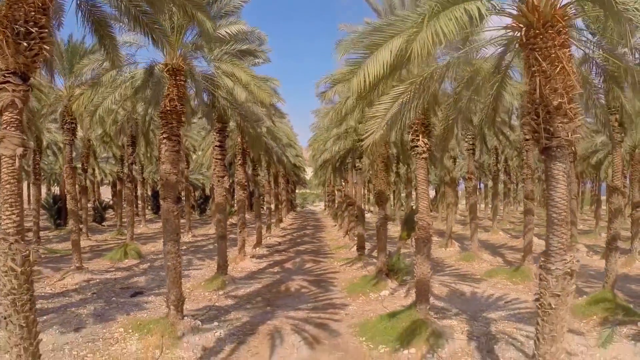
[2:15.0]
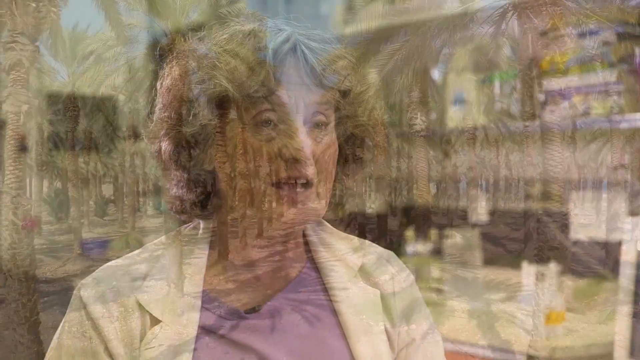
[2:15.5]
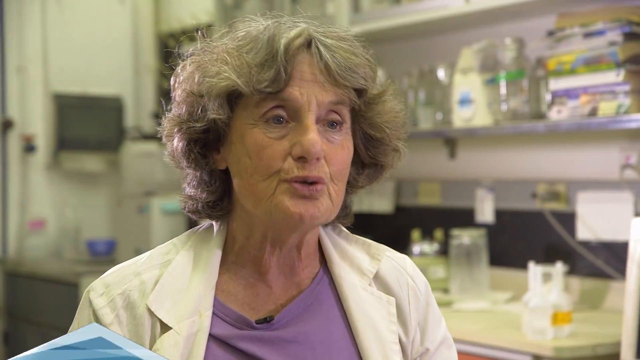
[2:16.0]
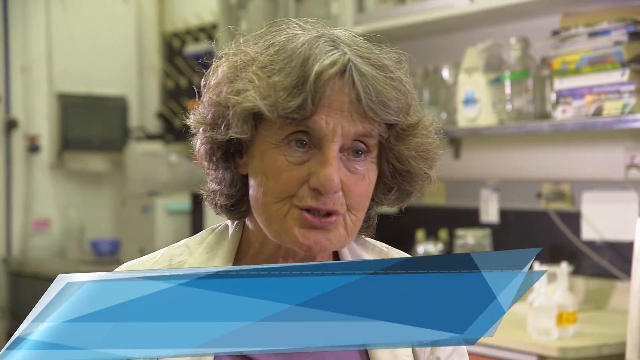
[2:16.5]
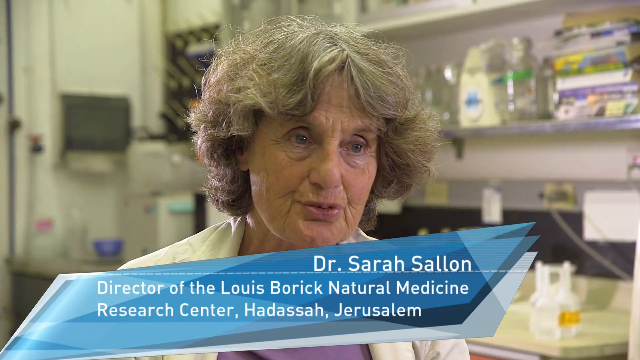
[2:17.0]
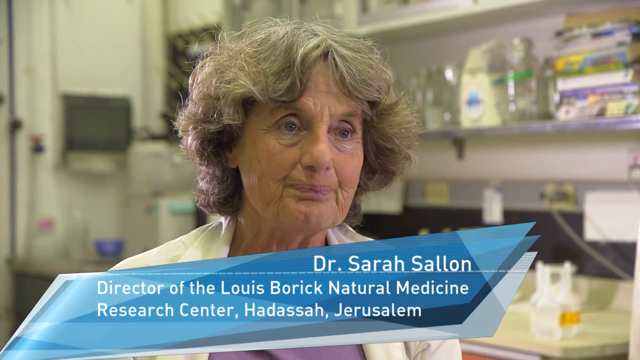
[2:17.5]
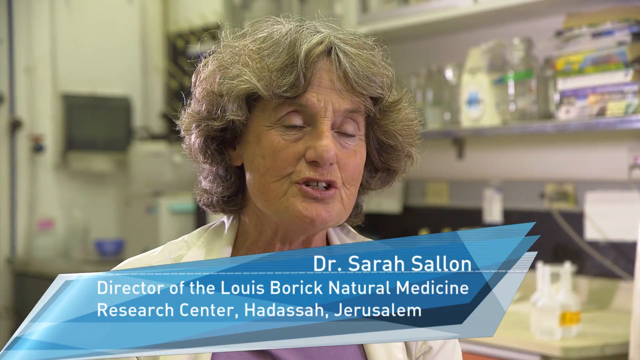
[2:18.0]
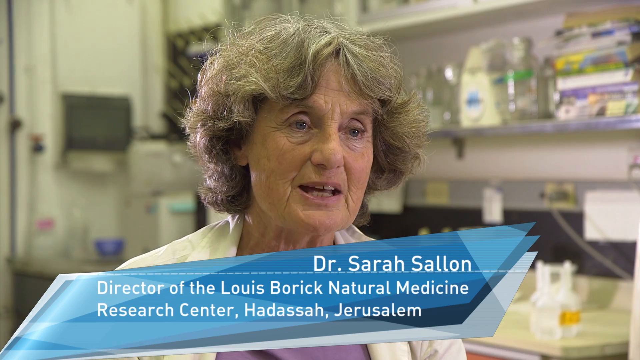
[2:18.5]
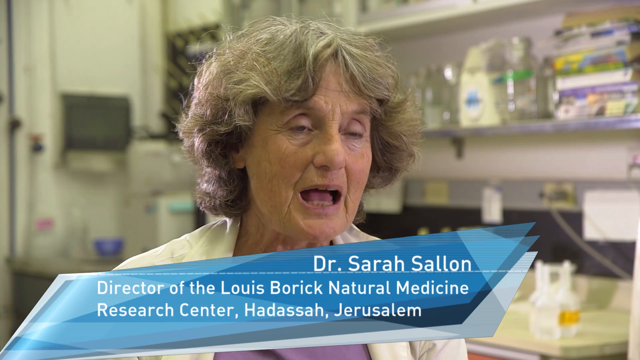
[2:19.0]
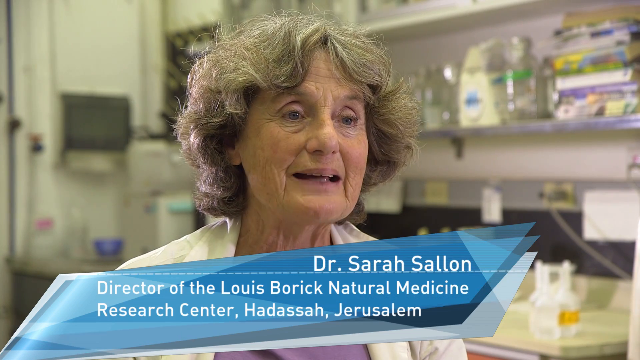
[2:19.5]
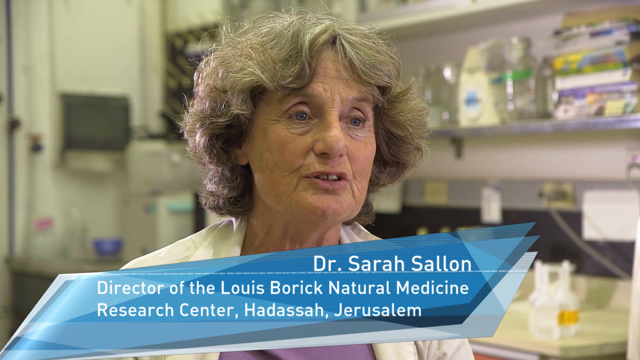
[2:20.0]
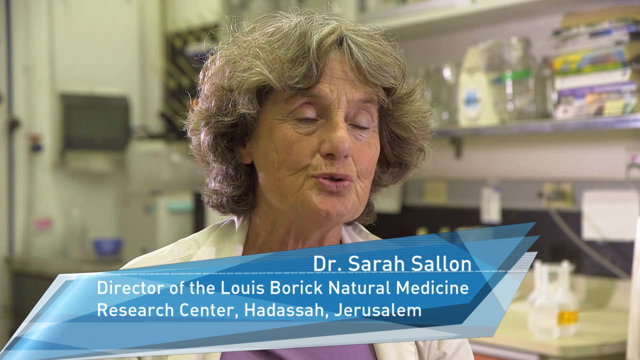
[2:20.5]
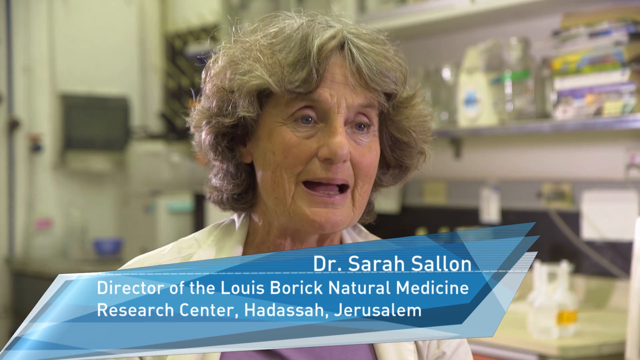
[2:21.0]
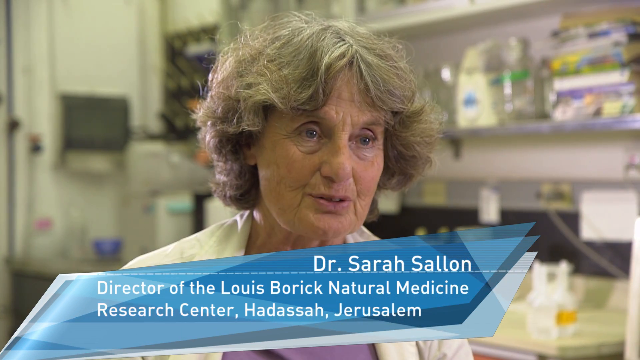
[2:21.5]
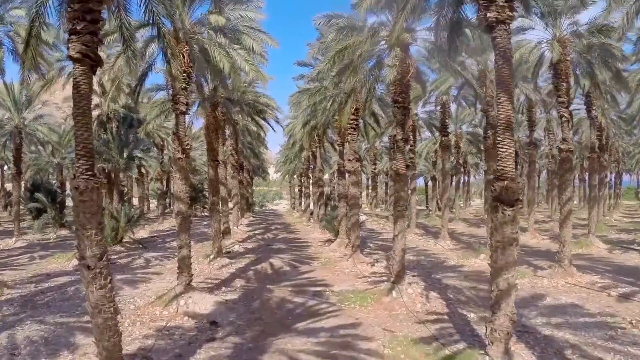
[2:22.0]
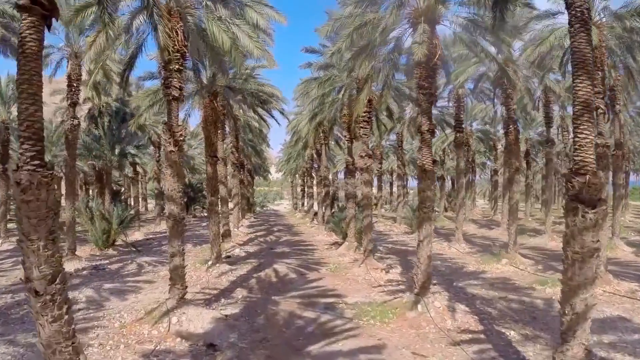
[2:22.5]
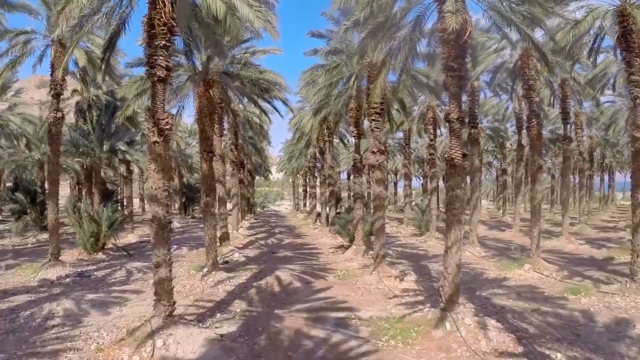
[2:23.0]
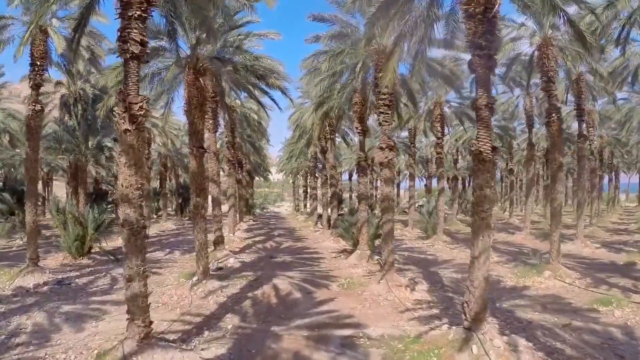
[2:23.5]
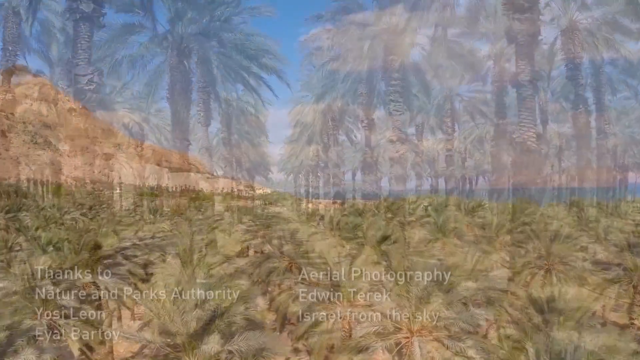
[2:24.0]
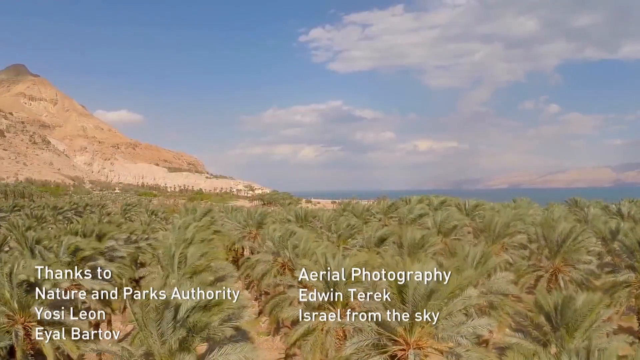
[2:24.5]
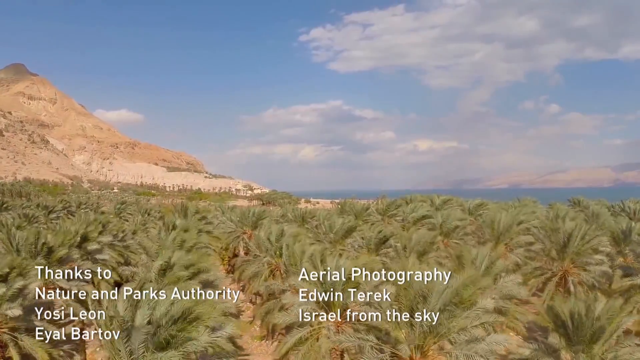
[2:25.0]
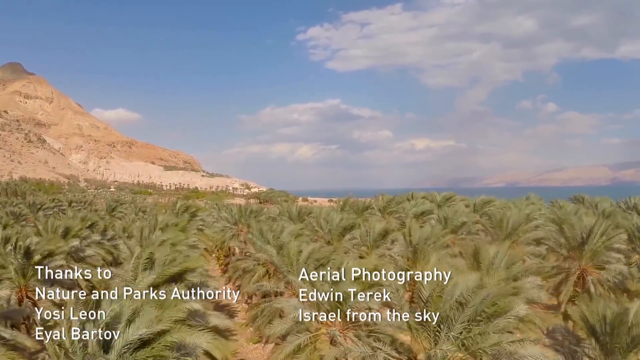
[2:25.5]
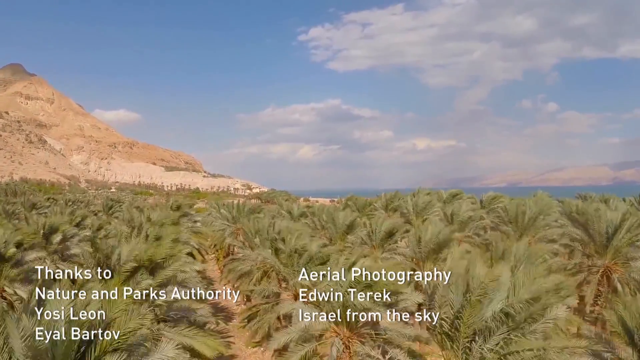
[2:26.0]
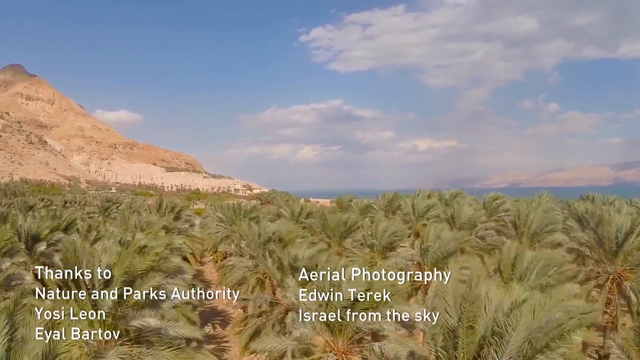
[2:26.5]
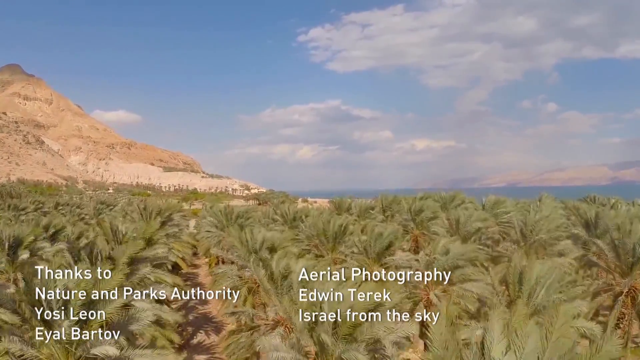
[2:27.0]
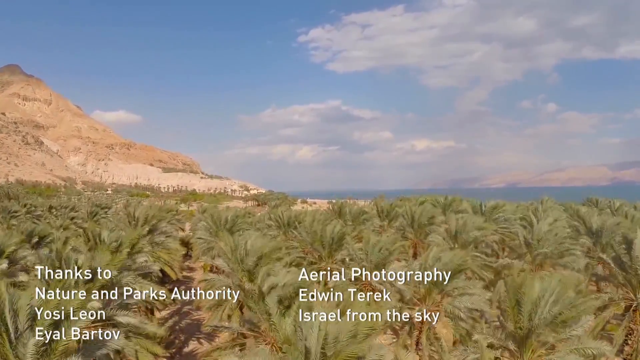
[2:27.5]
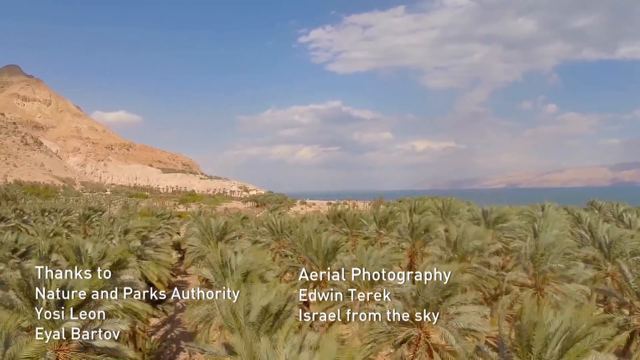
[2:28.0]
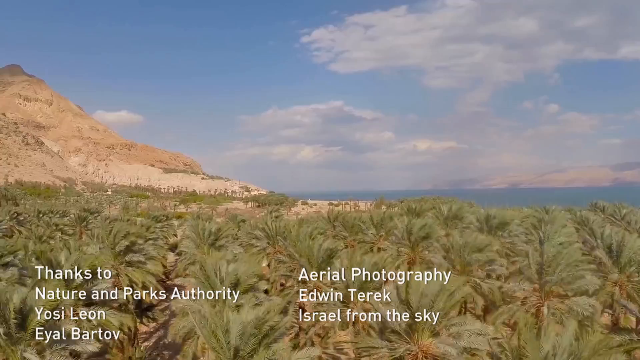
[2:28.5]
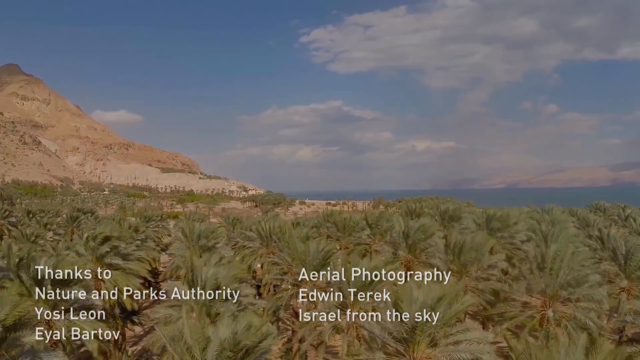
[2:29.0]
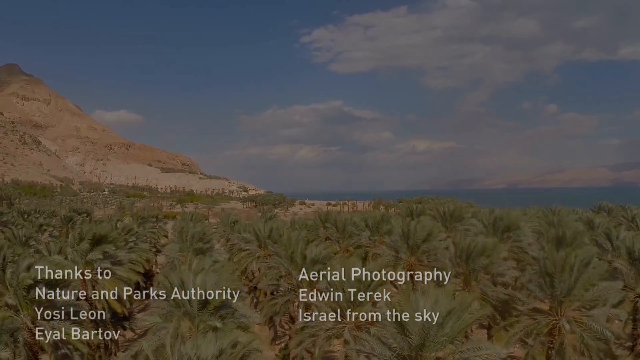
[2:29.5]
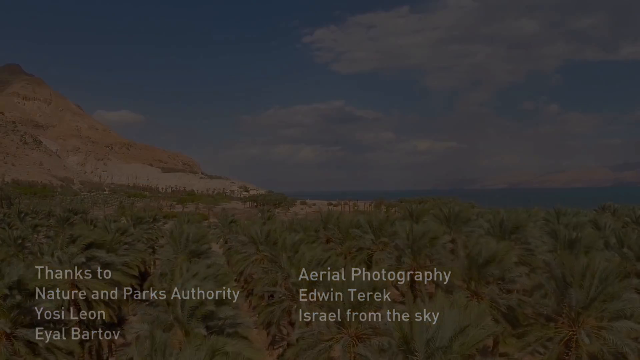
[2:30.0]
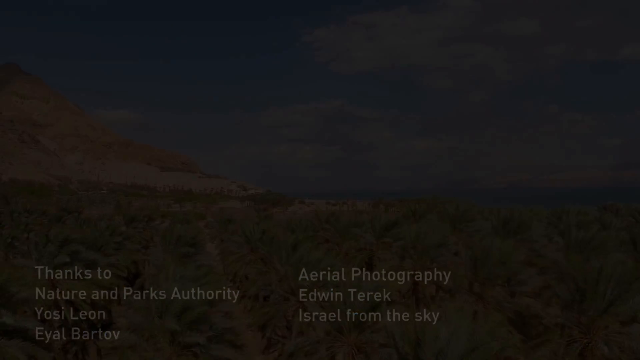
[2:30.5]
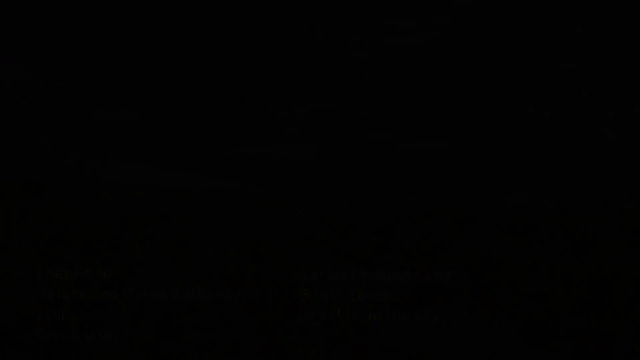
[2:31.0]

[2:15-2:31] Dr. Sarah Sallon appears, and the video keeps shifting to the plantations in aerial views showing a very large number of the trees, across what looks like several acres. She is still talking about the trees and seems very enthusiastic. The video shifts to what appears to be a mountain in the background, with clouds and an ocean or a lake, and a large quantity of Judean date palms. At the bottom, credits appear, including a credit for aerial photographs to Edwin Tarrack, as the video comes to an end.